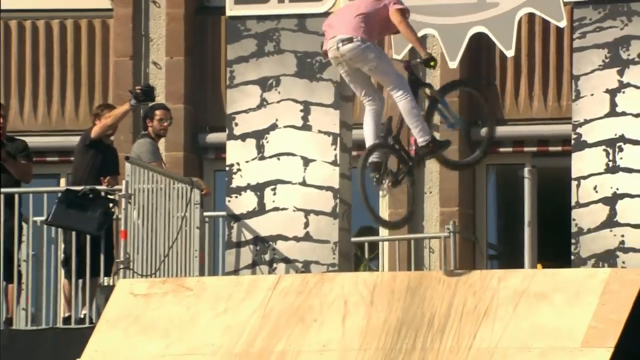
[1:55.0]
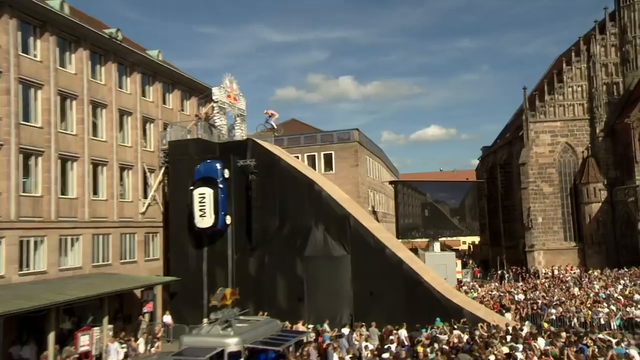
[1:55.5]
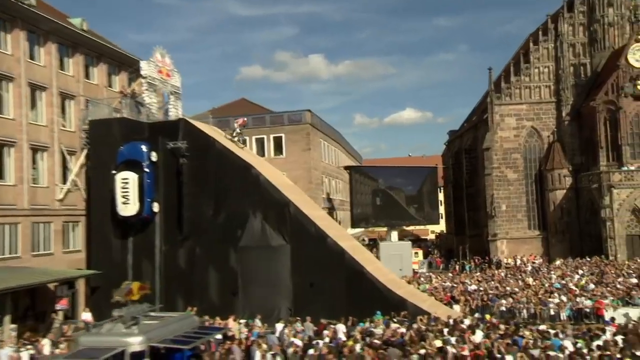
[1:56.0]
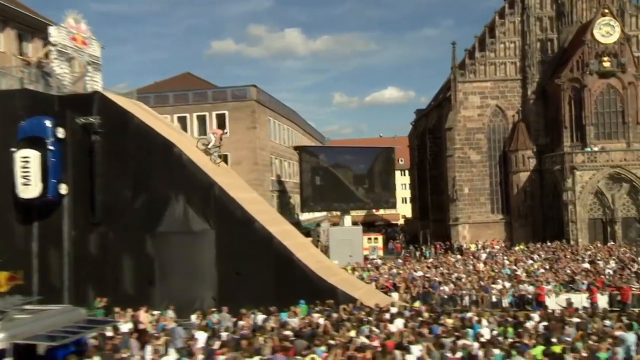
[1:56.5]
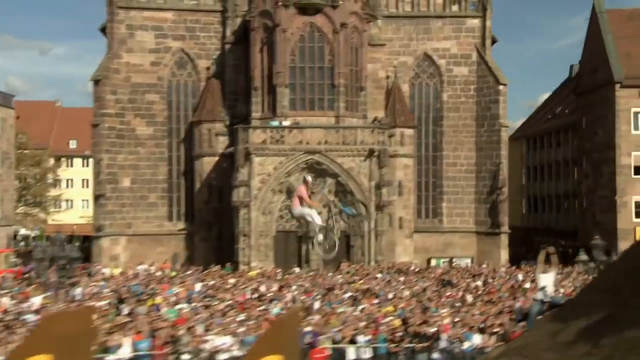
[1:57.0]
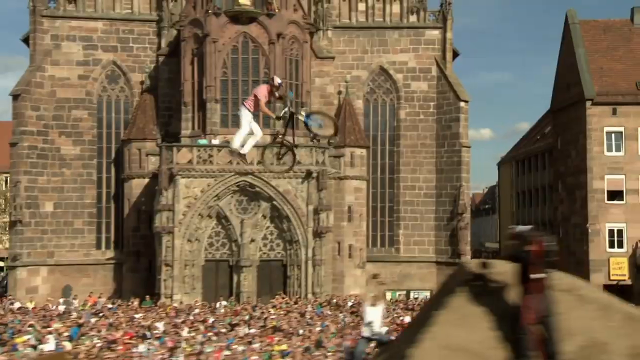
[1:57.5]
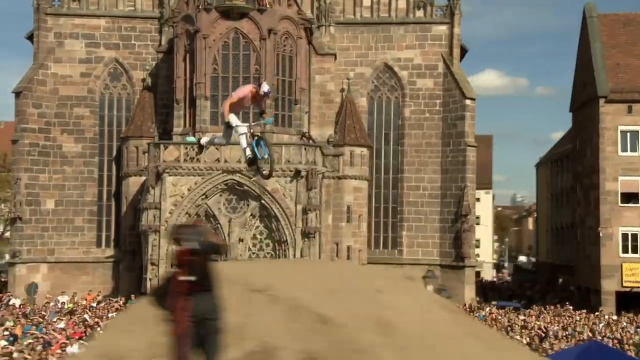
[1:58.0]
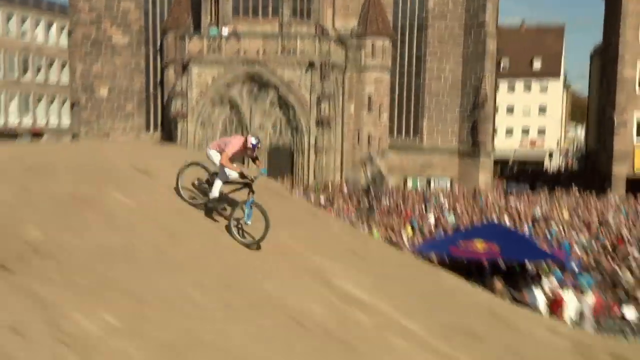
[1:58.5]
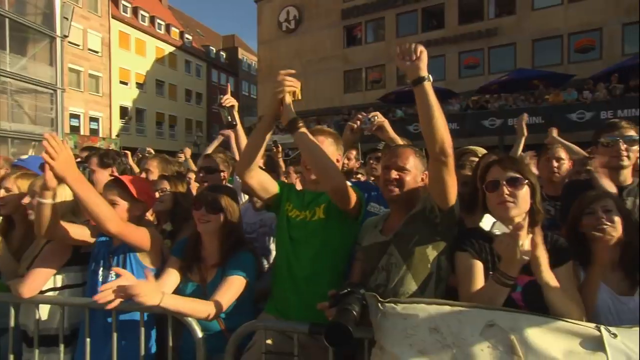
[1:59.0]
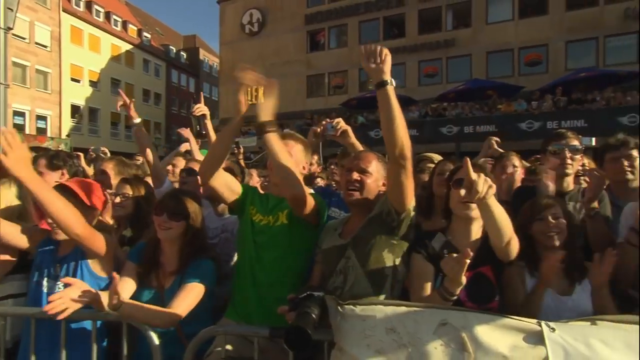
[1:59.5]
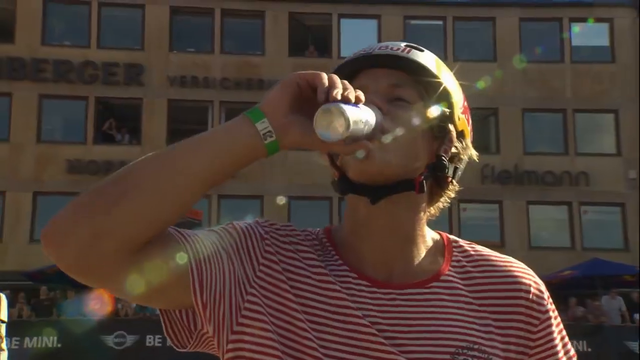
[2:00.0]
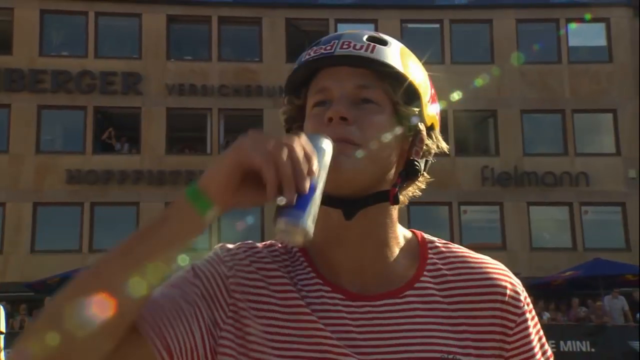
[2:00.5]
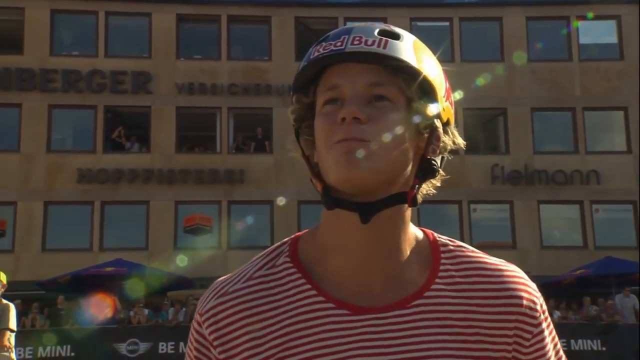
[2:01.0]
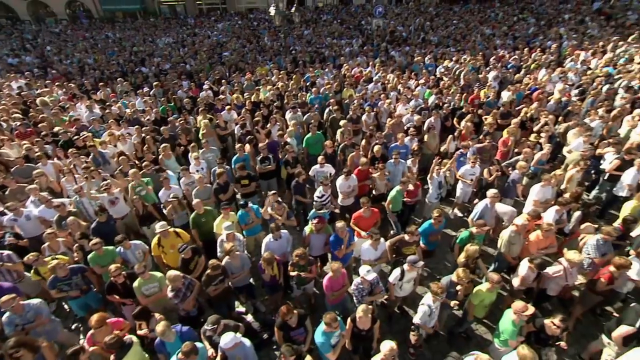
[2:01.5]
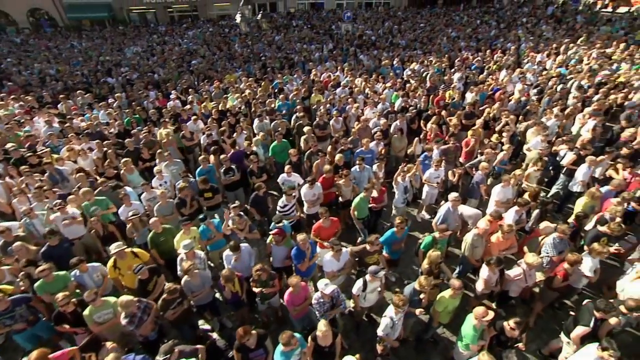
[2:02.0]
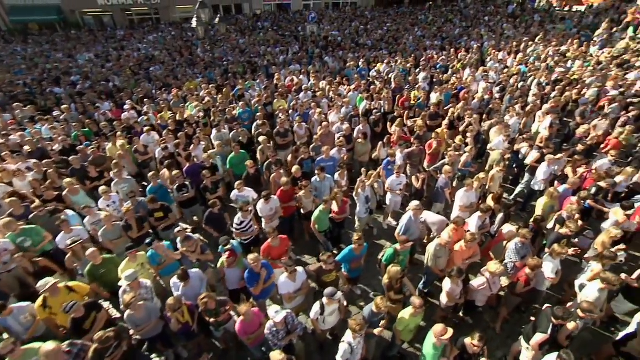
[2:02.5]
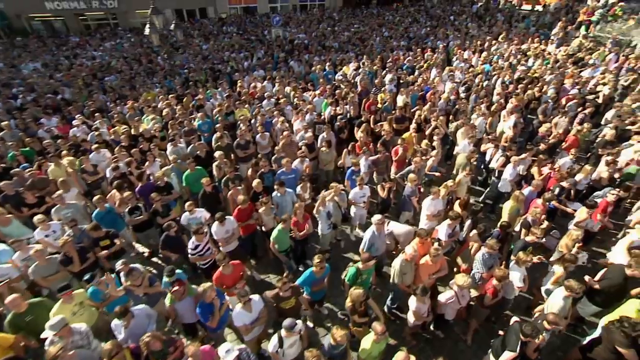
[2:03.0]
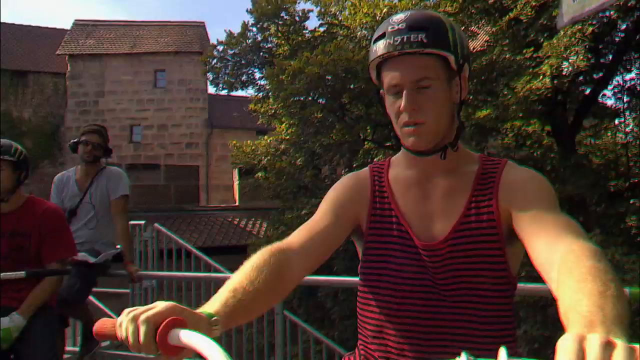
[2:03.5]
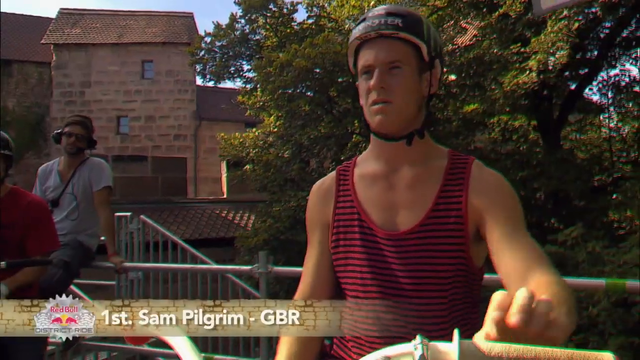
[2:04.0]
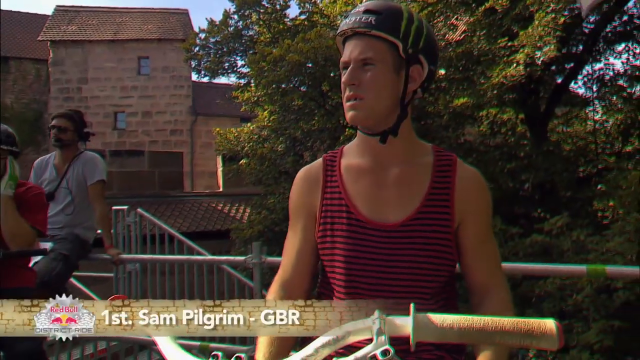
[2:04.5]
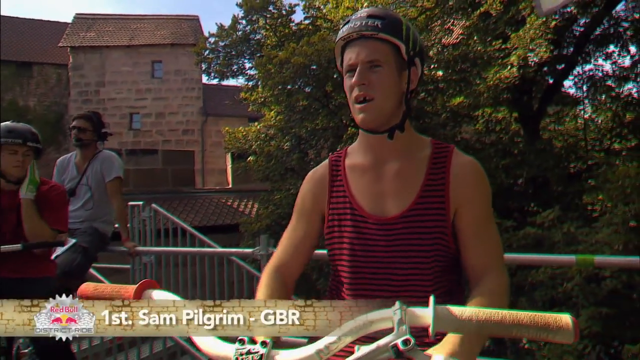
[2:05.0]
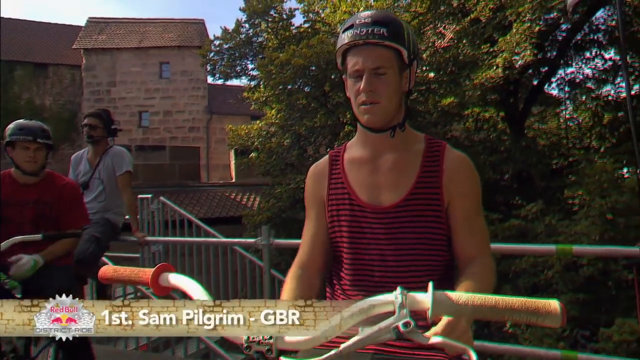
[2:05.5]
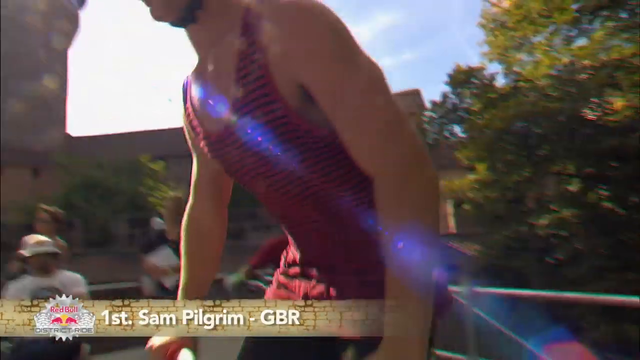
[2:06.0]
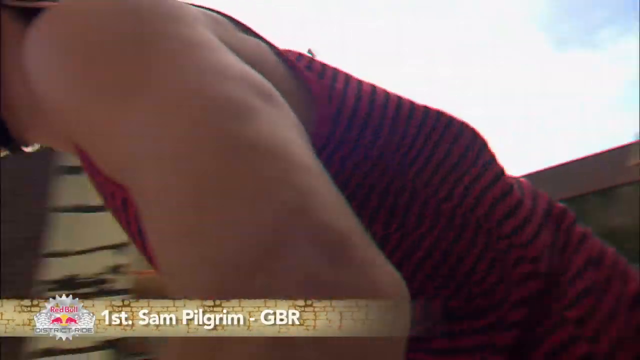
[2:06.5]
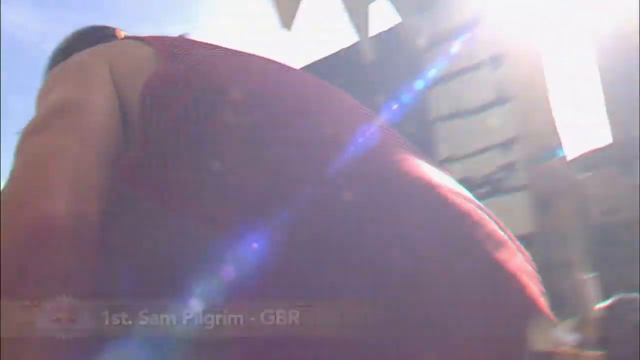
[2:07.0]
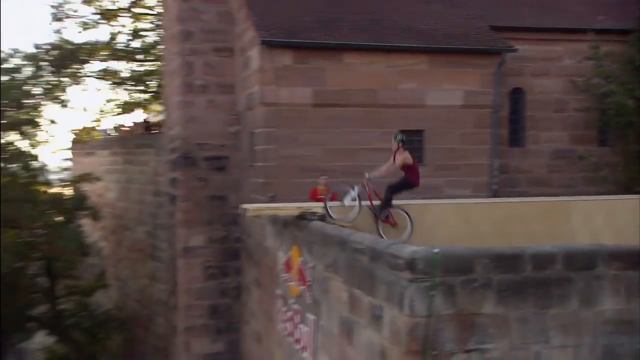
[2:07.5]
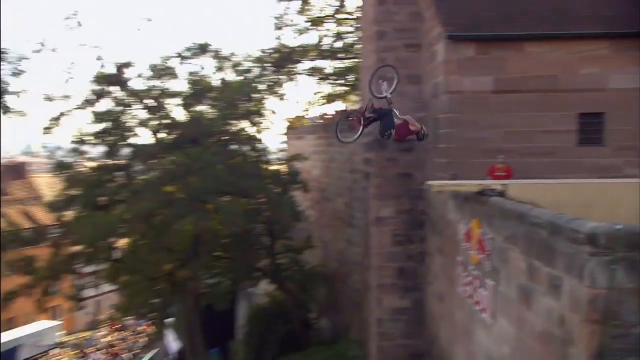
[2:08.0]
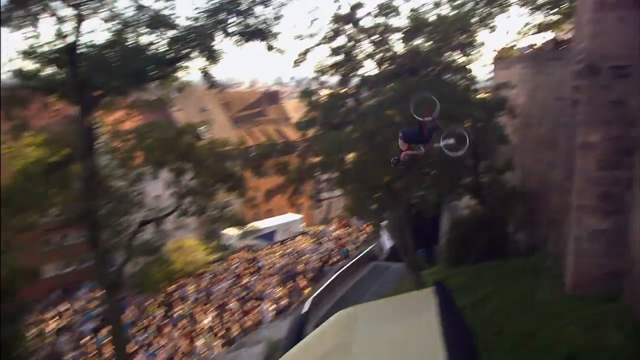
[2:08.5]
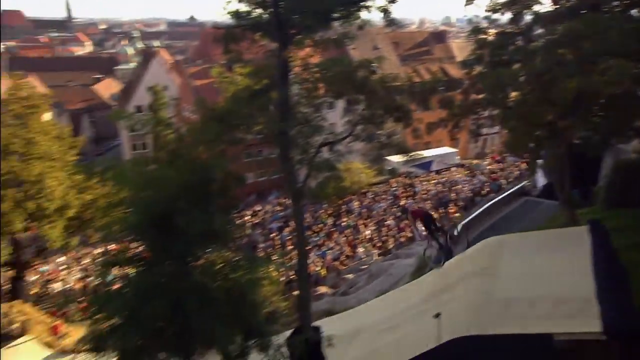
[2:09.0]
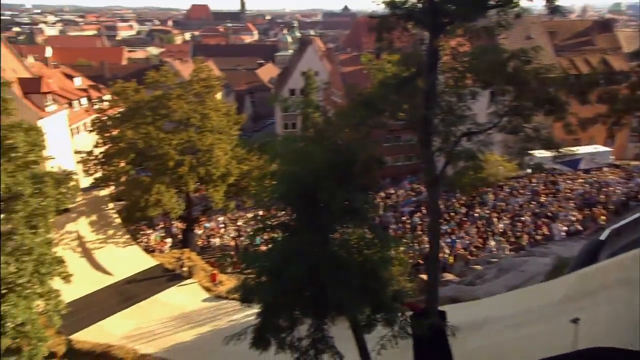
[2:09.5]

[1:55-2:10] At an outdoor event kind of like an all-wheels extreme event in a very large city, bicyclists perform stunts before an extremely large, packed crowd. A first-place rider from Germany does flips going down an extremely large ramp to the bottom, where he takes a break and sips on what looks like chocolate milk. The event is put on by Red Bull, and the crowd cheers as he spins through the air and lands safely. In one of the events, a thin board is on top of a building, and a bicyclist flips all the way off the building down to a ramp that extends down and up to another area surrounded by a large crowd.